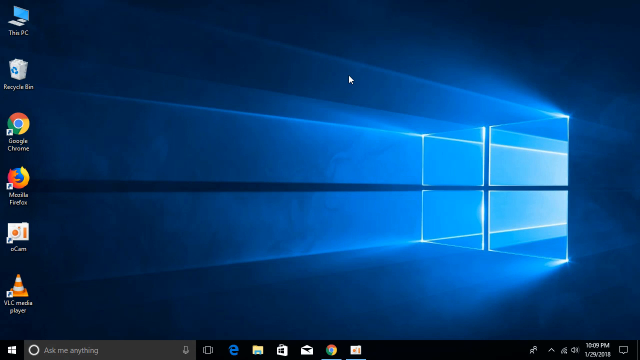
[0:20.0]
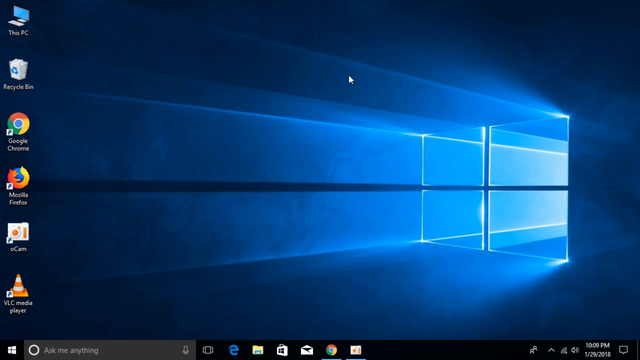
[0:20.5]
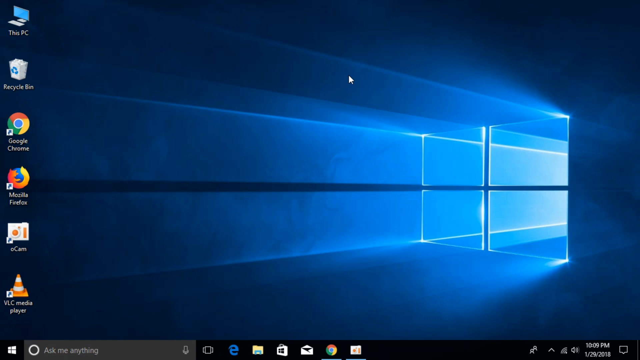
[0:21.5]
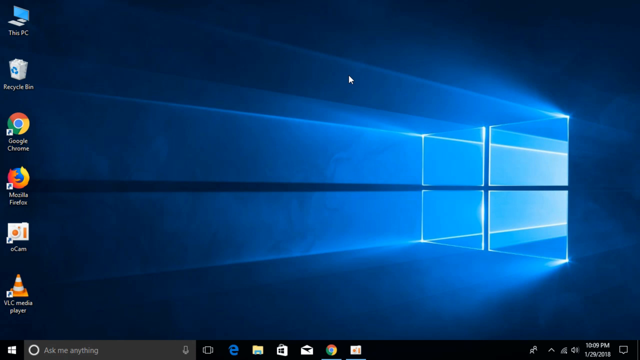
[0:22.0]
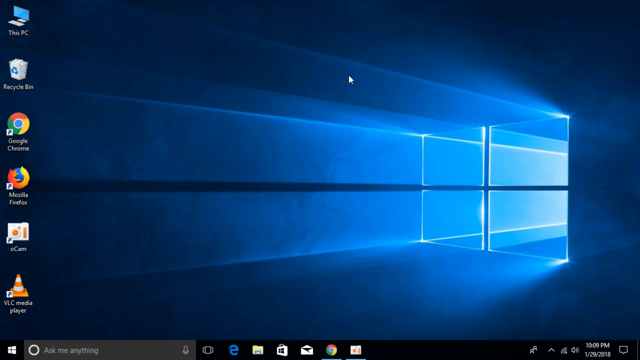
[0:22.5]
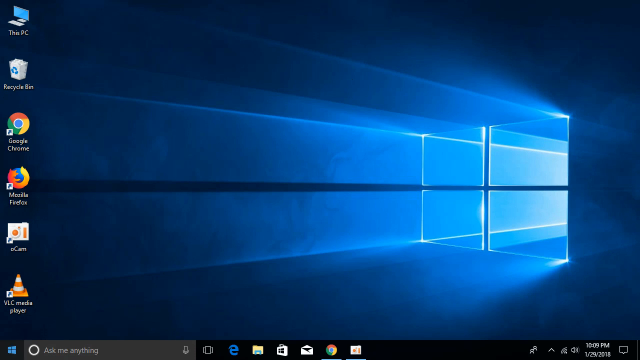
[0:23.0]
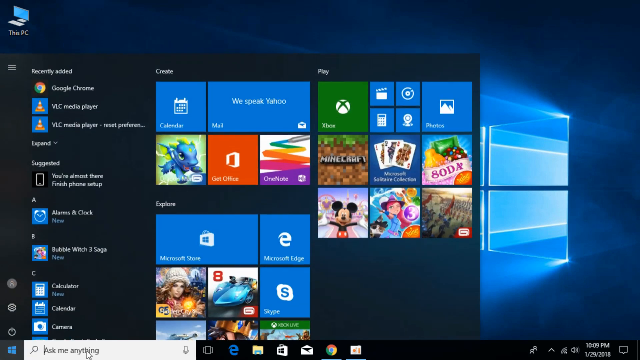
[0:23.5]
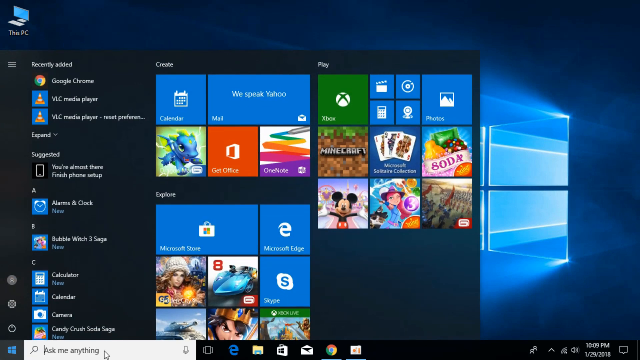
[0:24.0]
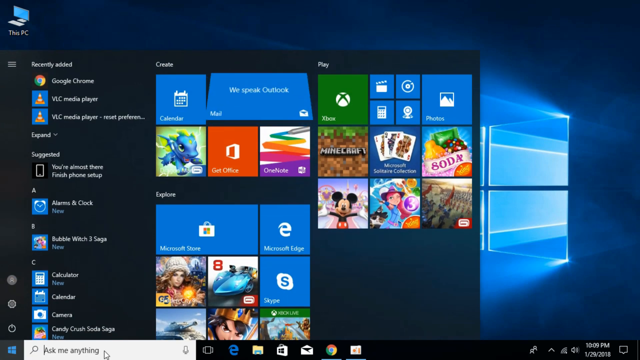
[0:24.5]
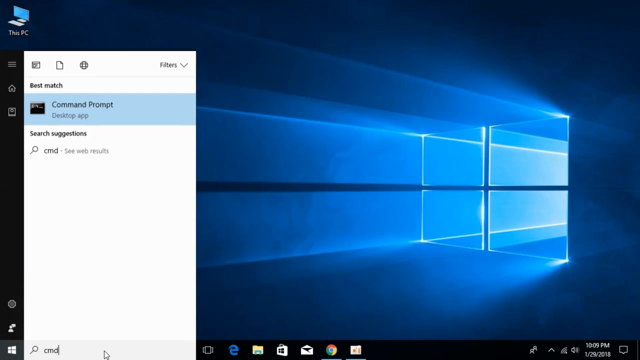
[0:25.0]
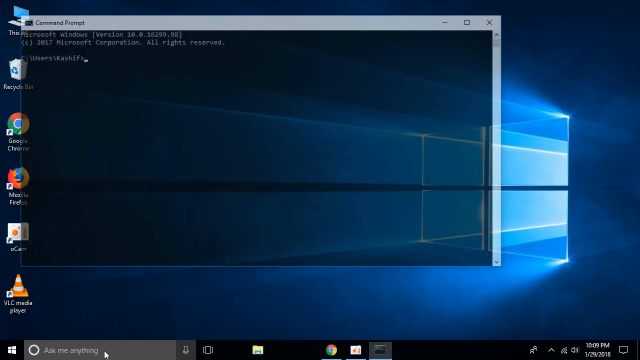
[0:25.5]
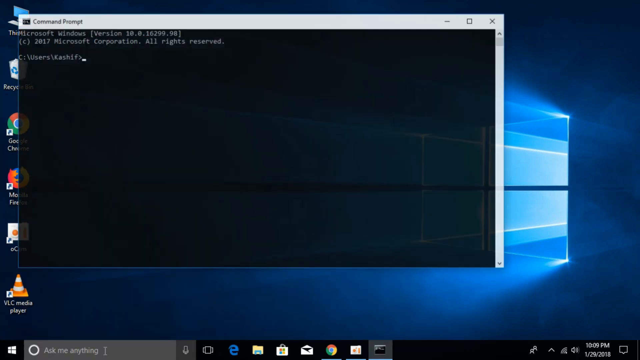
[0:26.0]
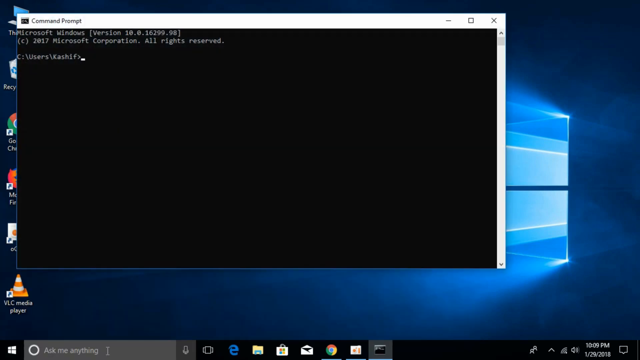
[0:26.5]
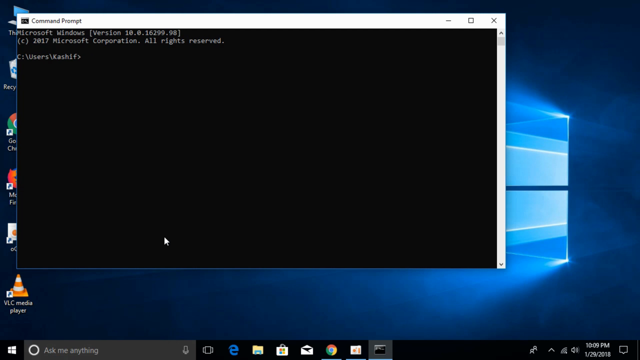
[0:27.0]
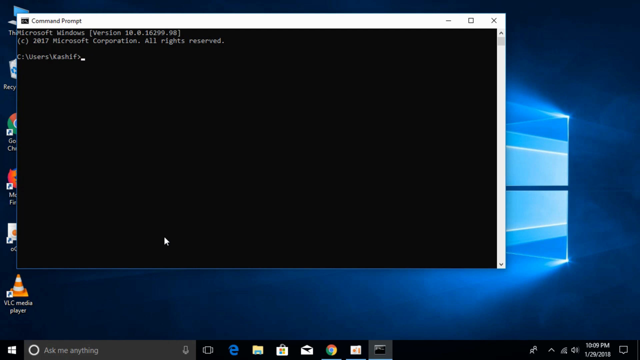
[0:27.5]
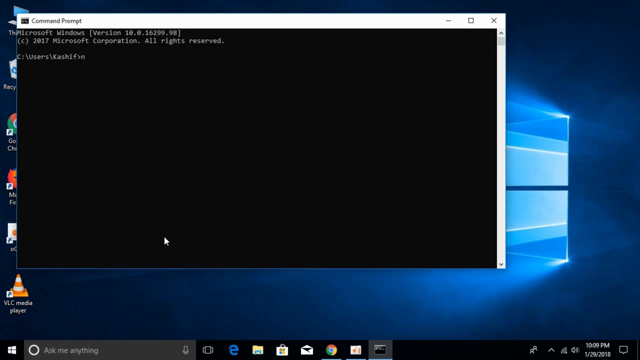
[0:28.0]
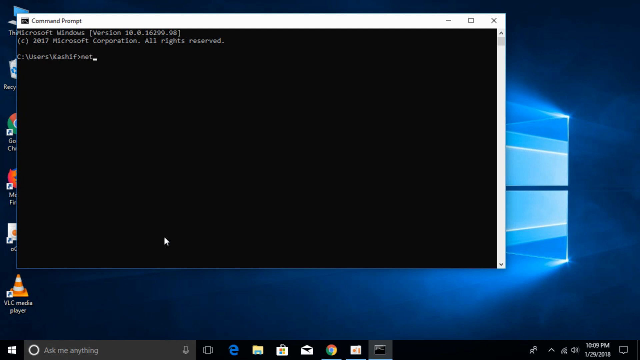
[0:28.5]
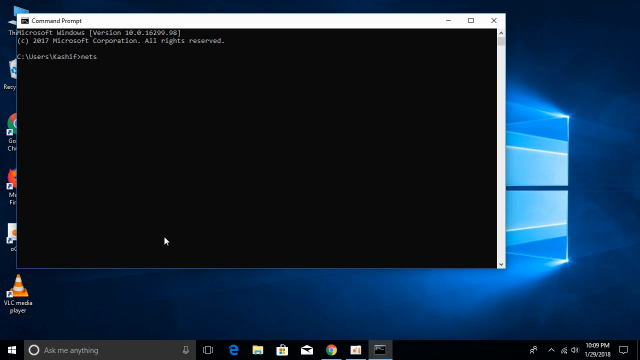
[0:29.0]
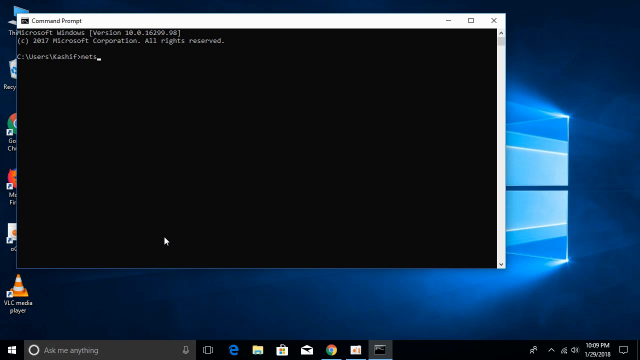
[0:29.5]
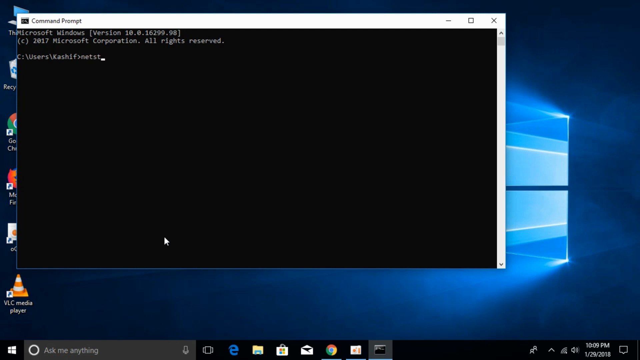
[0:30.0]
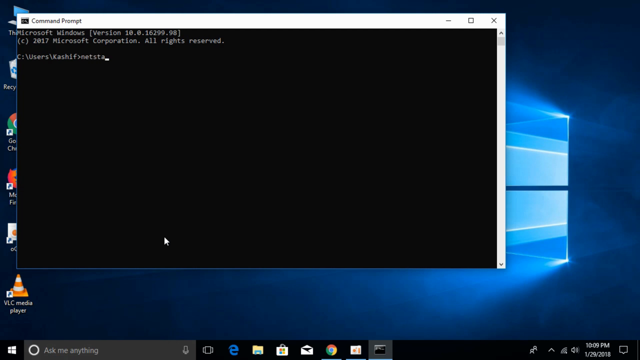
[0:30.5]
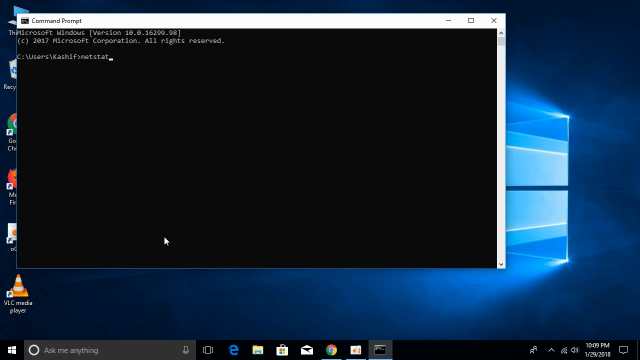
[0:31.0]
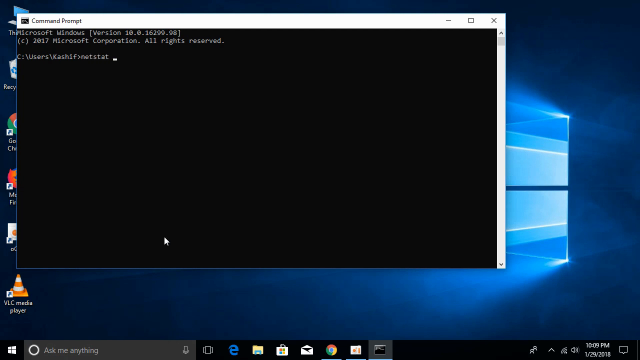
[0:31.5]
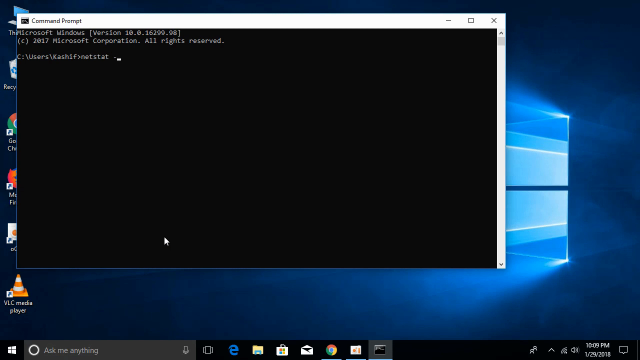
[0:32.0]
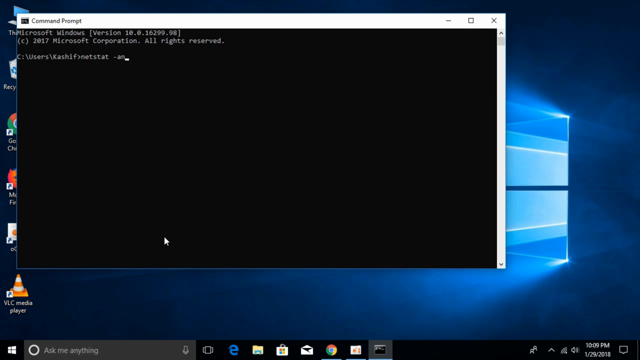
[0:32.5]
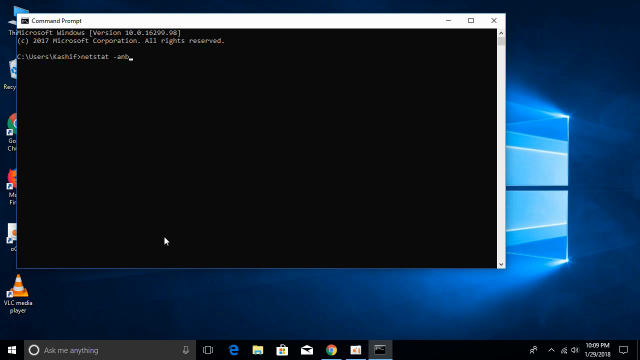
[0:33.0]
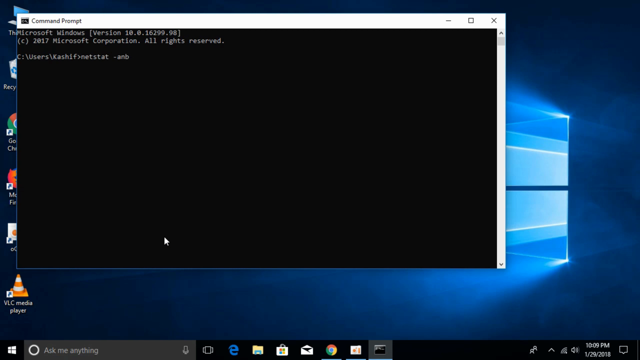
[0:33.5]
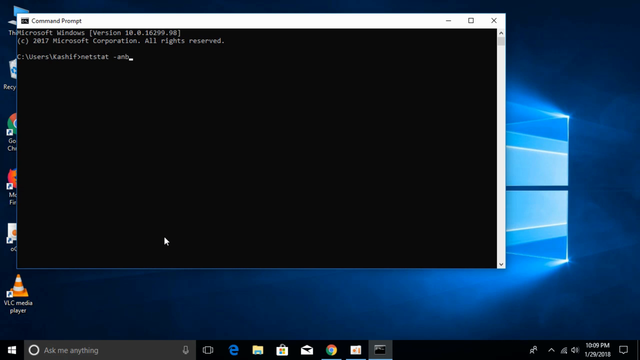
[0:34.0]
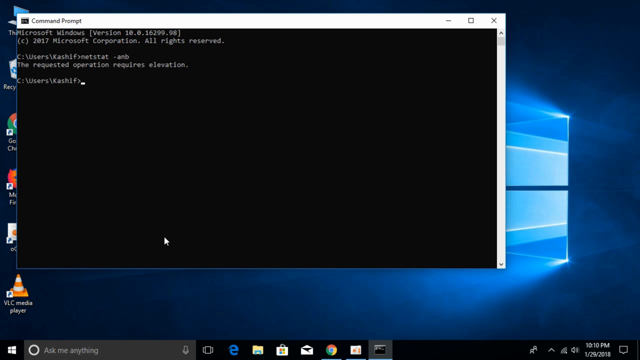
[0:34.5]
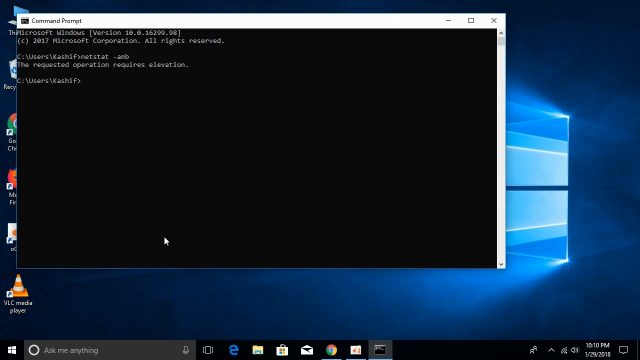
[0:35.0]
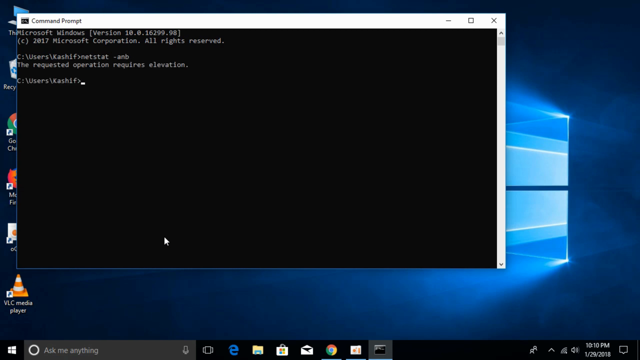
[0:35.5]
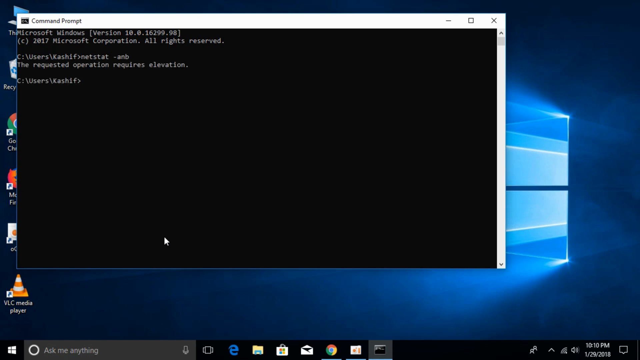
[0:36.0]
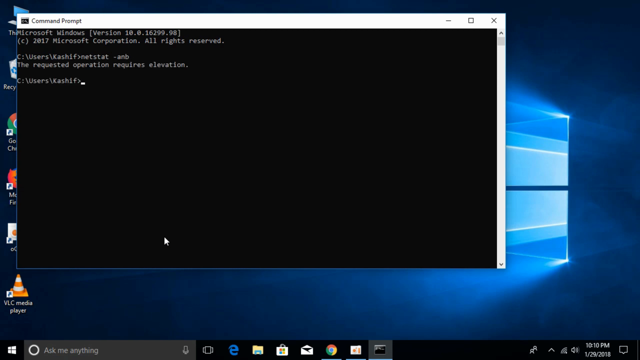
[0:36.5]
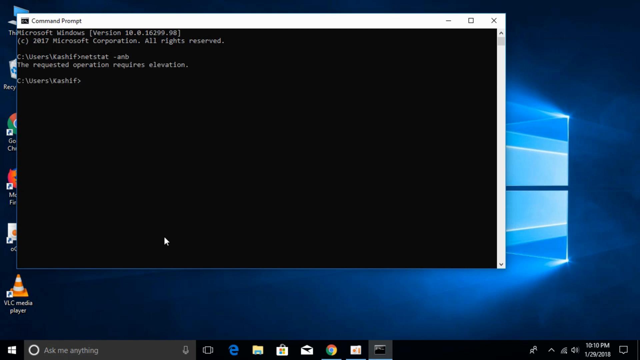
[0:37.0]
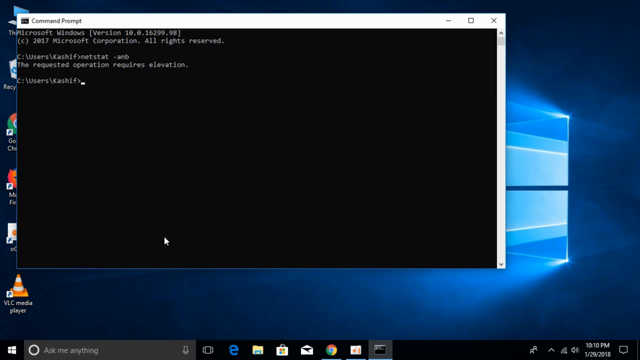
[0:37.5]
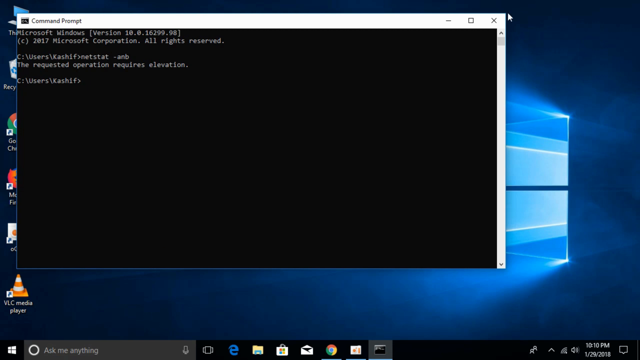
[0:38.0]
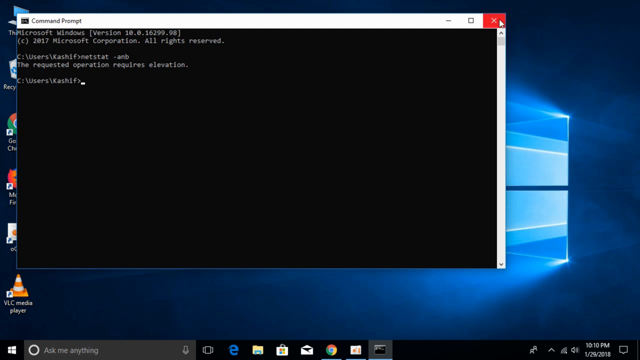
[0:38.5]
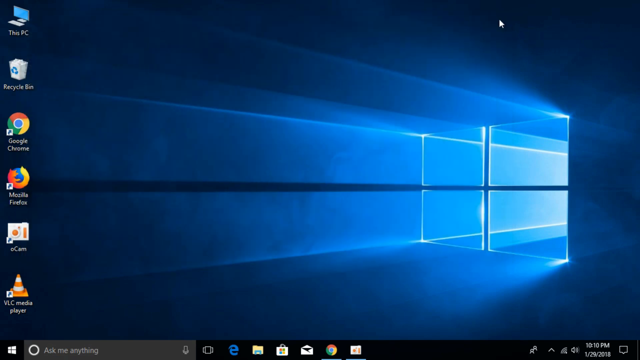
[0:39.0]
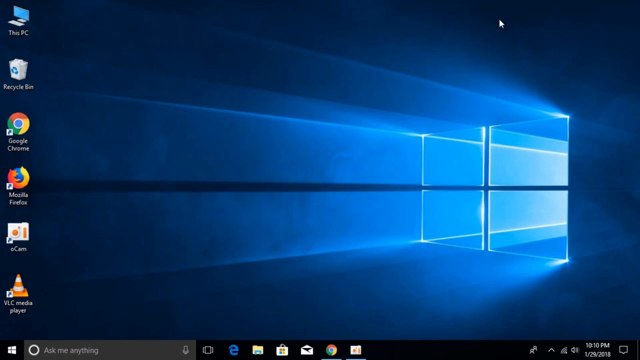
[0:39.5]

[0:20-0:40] The picture is not clear, but the background is visible, and its color shows differently. The content apparently relates to programming.